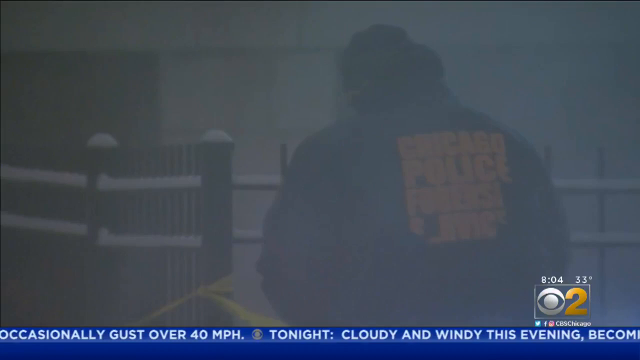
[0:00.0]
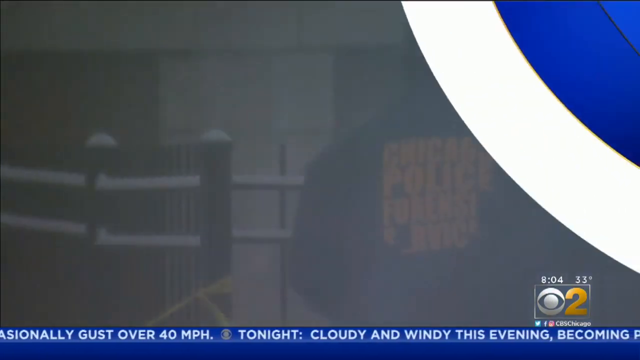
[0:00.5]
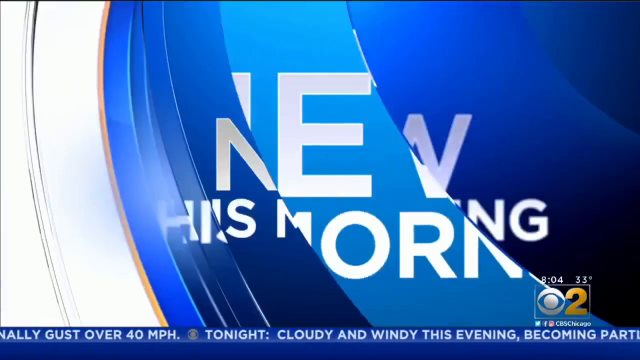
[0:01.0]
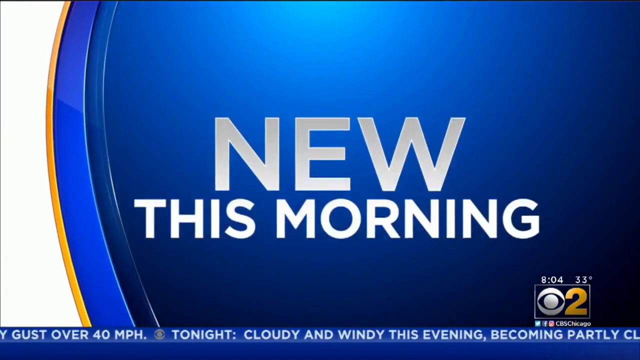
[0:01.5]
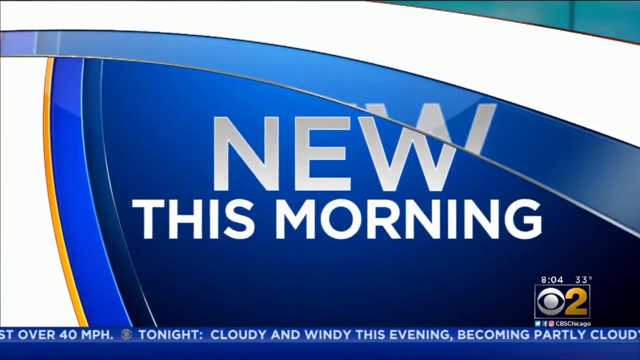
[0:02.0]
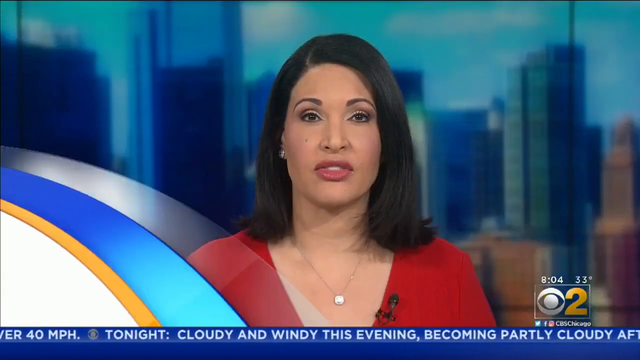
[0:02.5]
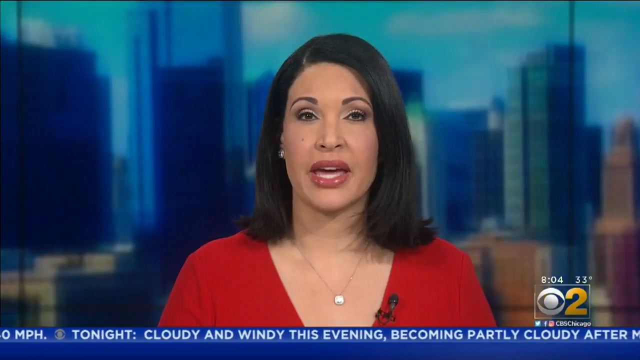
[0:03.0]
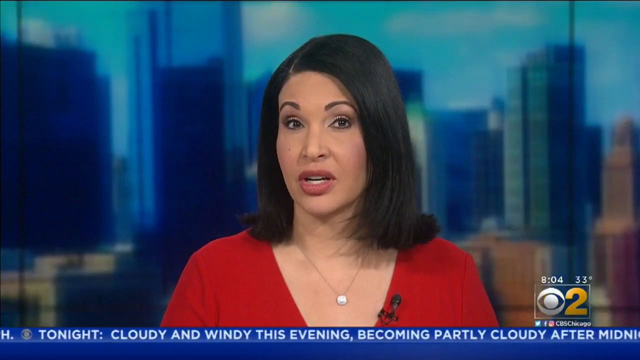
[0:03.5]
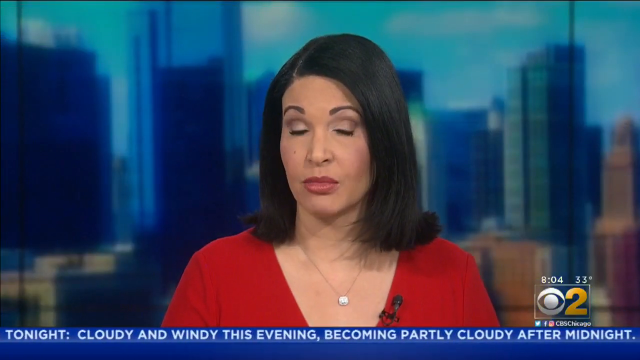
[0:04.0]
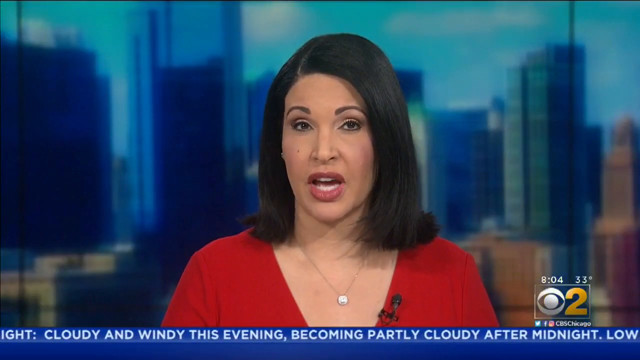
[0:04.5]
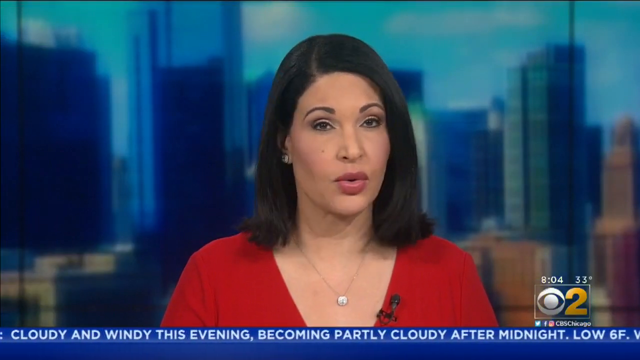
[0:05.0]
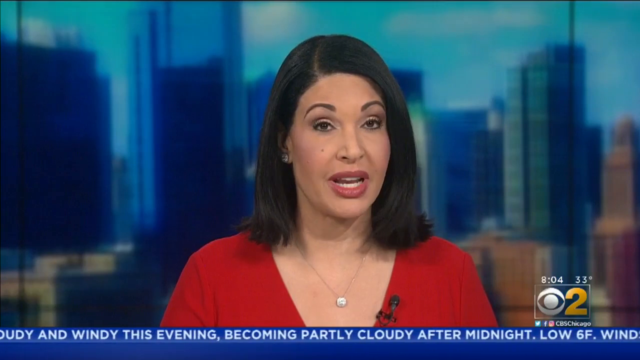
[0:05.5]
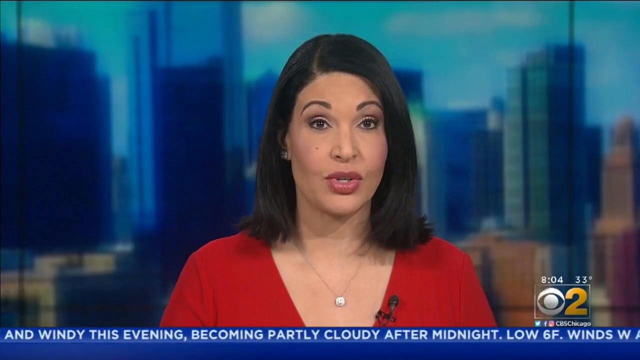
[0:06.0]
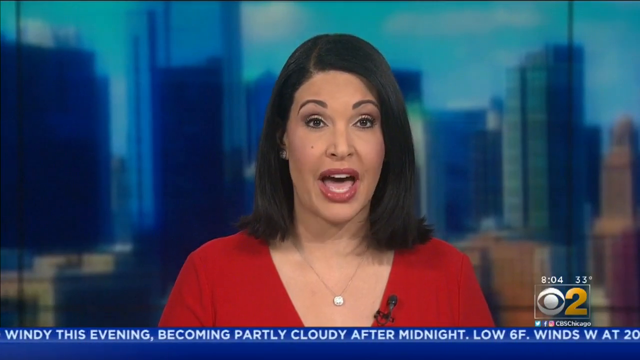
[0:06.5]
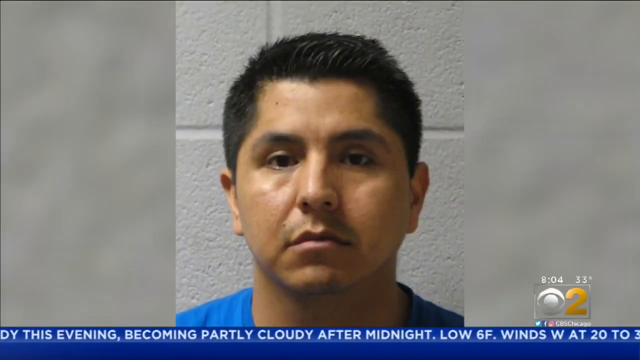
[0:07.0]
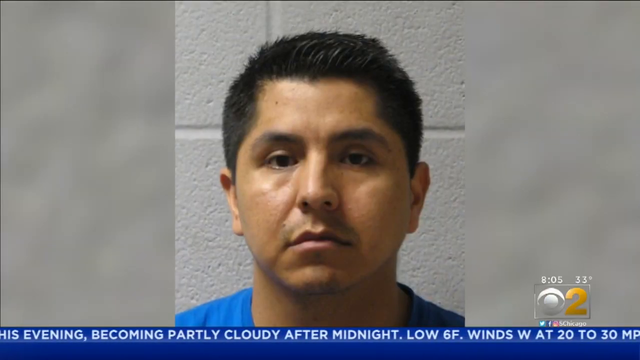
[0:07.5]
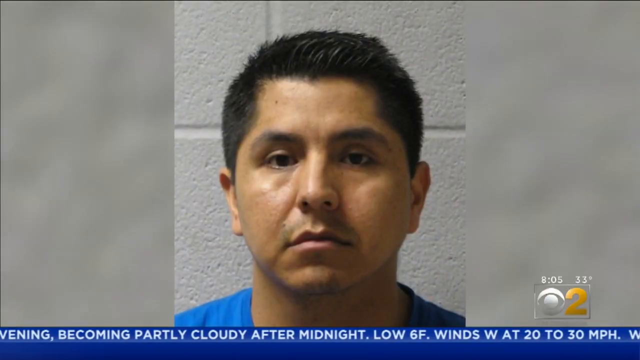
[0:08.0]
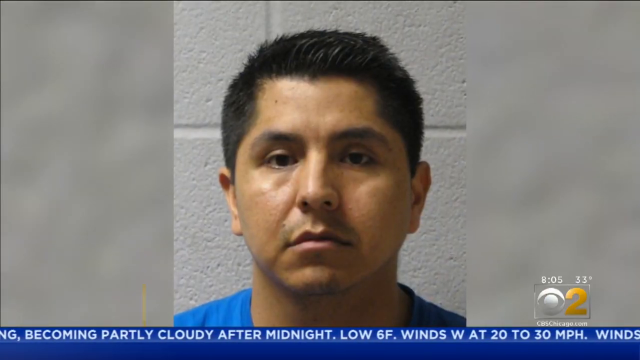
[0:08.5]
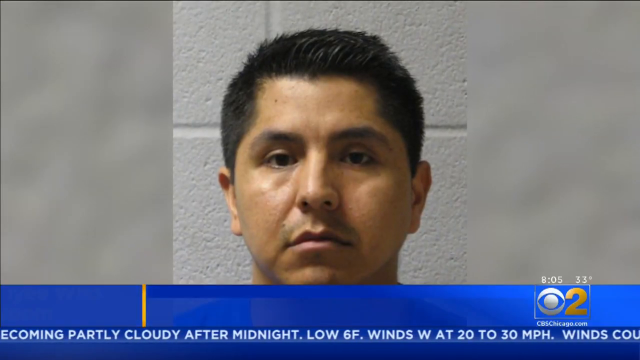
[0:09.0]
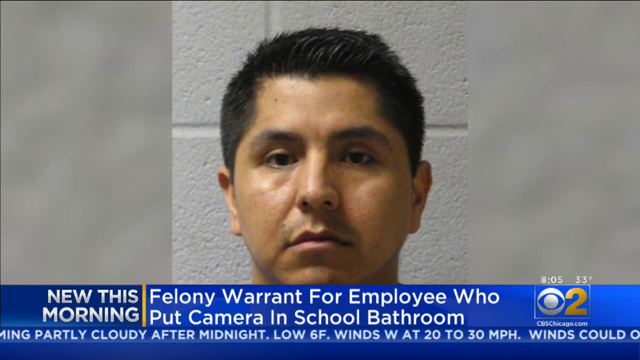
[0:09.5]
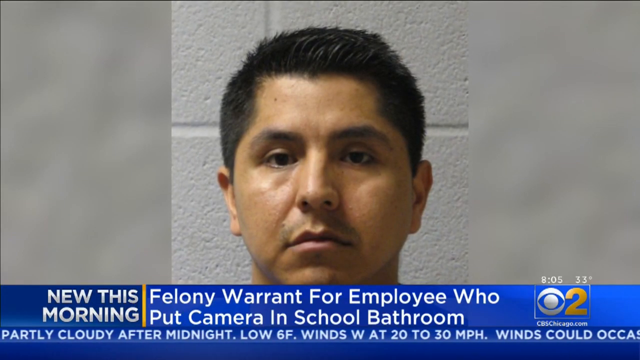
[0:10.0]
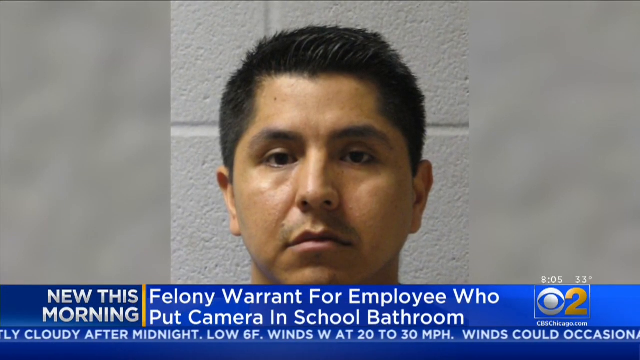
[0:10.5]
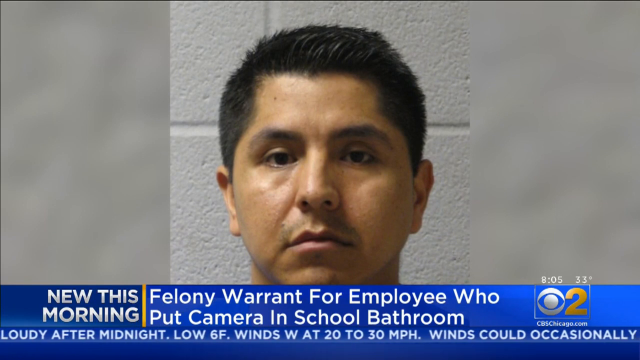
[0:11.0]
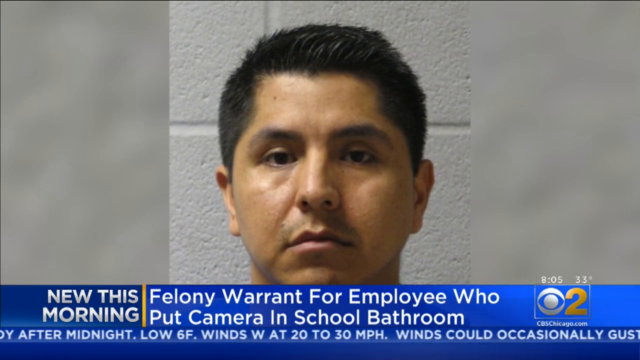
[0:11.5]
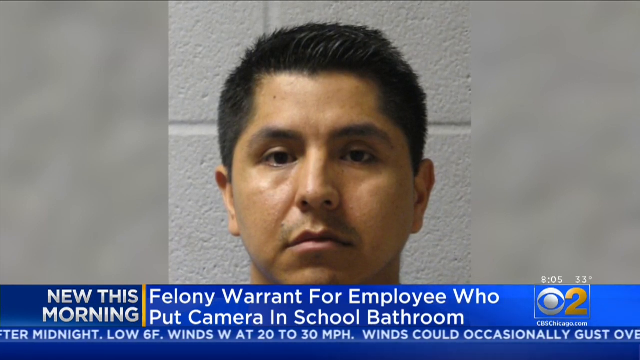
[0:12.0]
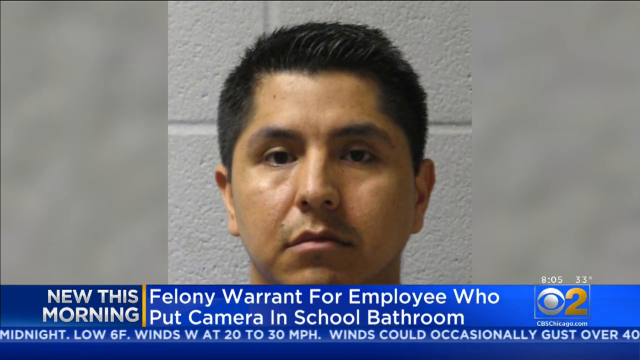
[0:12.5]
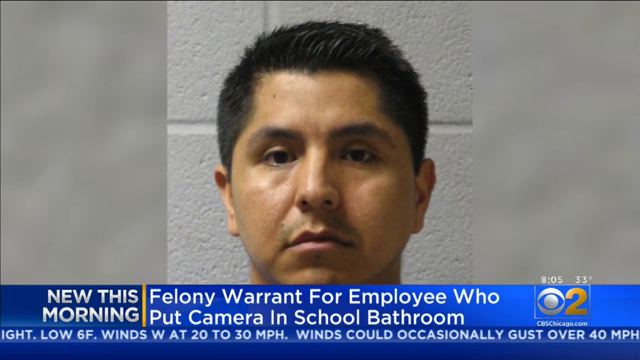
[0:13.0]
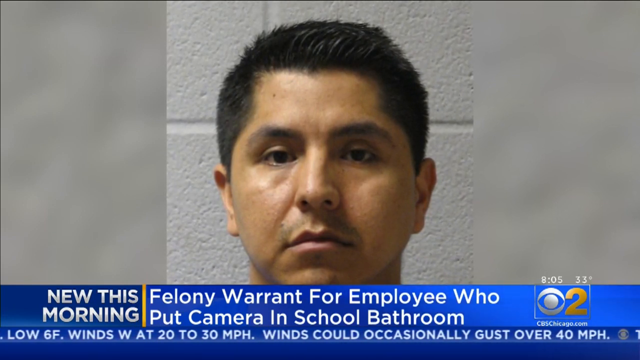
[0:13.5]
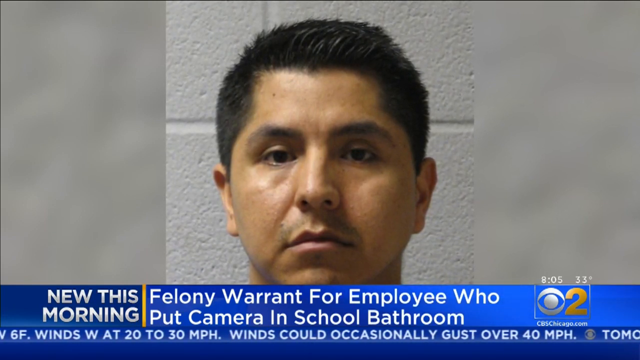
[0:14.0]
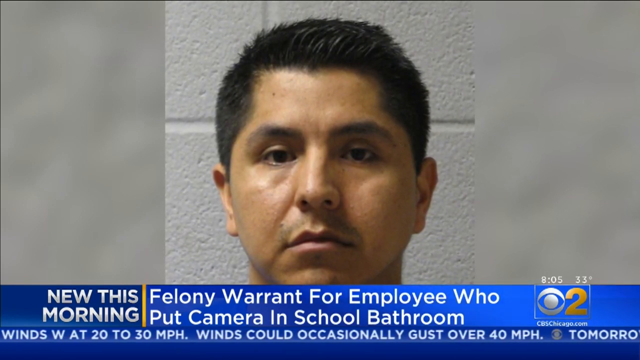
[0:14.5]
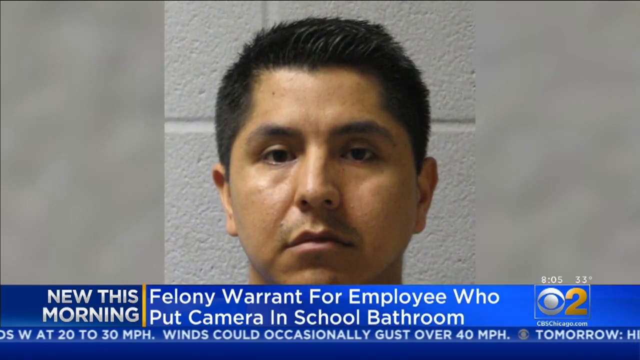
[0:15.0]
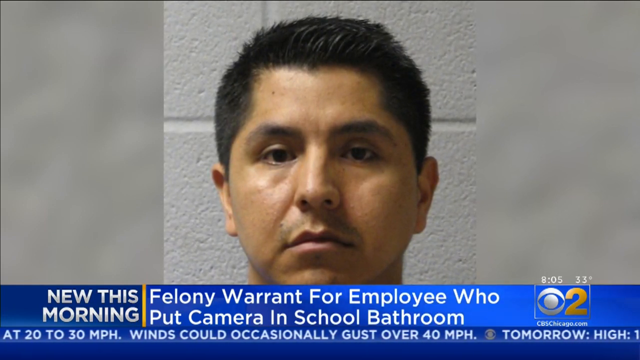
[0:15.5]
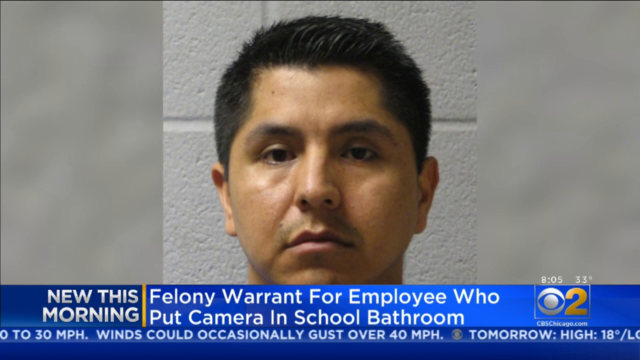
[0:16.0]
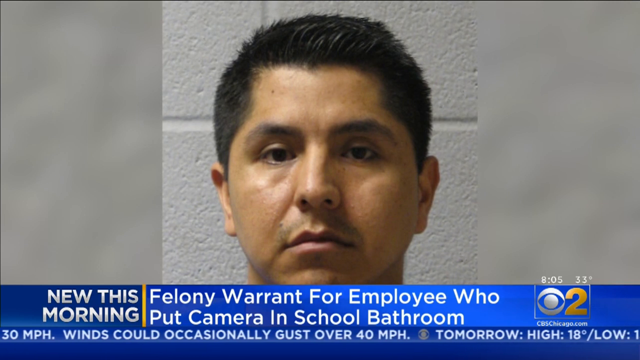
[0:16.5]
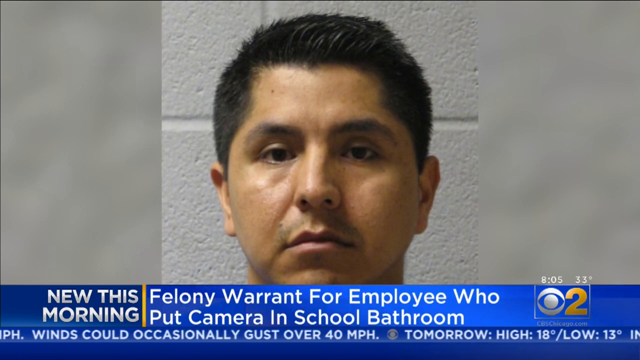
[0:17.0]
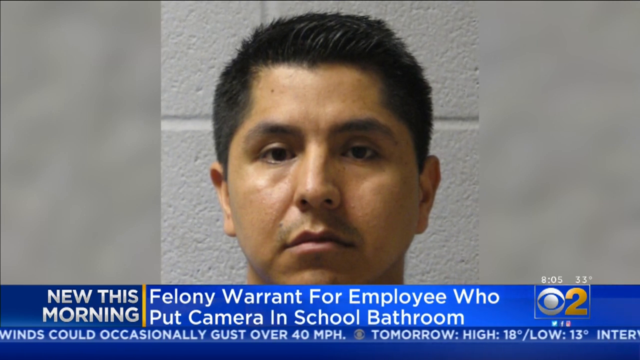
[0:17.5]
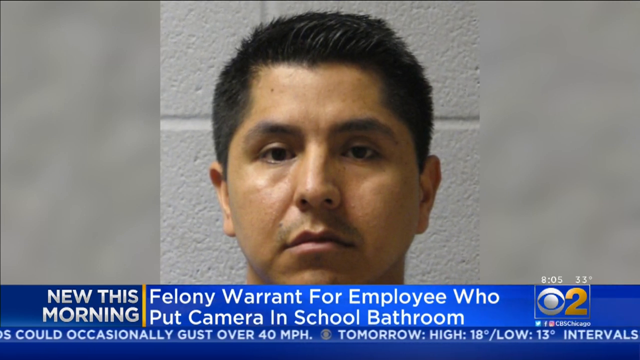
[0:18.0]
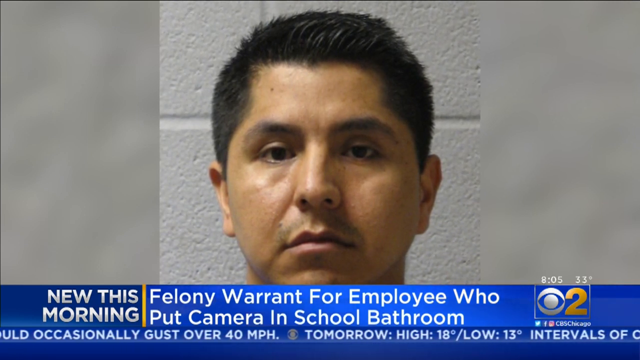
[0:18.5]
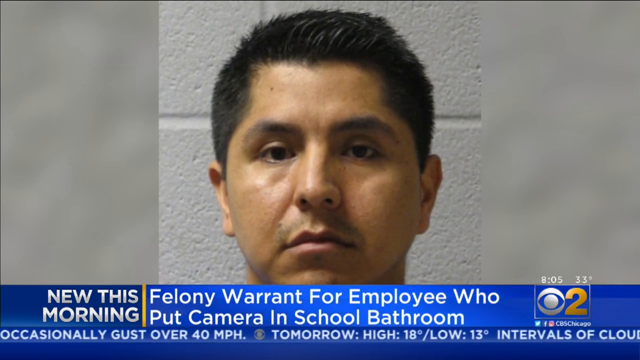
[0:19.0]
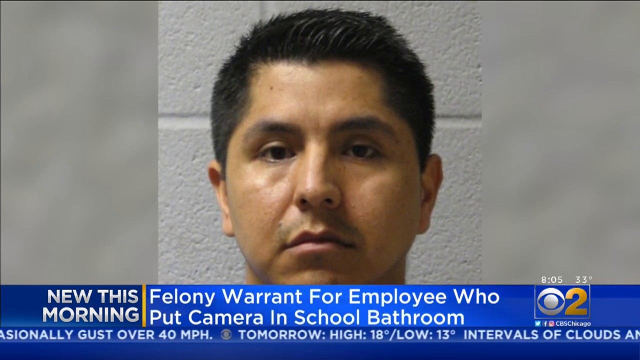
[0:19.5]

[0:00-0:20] The video opens with an unclear view of someone in a hooded jacket. An introduction then appears on a blue background with the text "this morning." A news anchor with long hair is then shown in a studio or newsroom. She wears a necklace and a pink dress, with a mic on her dress. Only the upper part of her body is visible, and behind her are blurry pictures of tall buildings. She seems to be reading the news to viewers. The title changes and a new face appears, apparently a man with a gloomy face and short hair, in front of a white wall. The headline below him reads "felony warranty for employees who put a camera in school bathrooms." The video stays on the man's face.